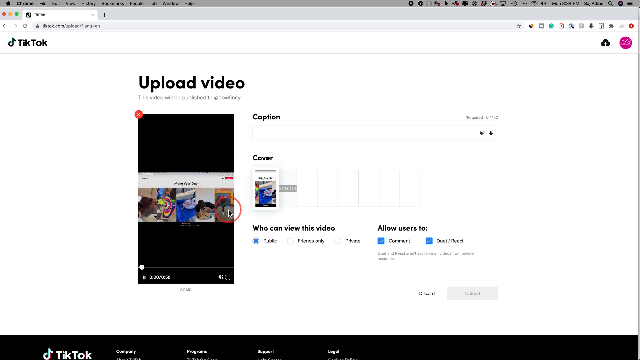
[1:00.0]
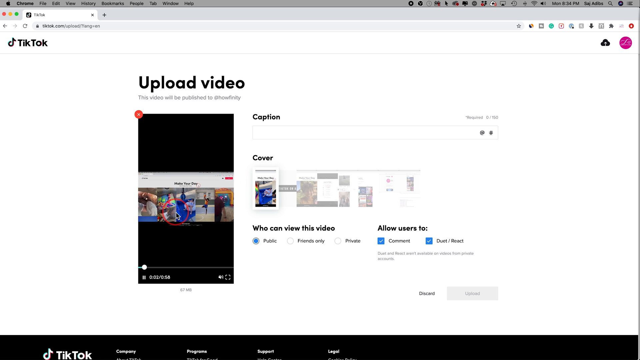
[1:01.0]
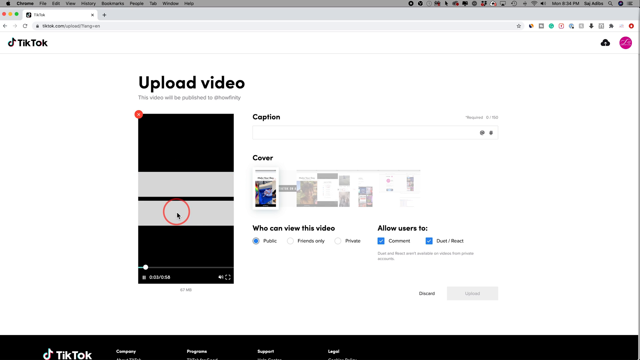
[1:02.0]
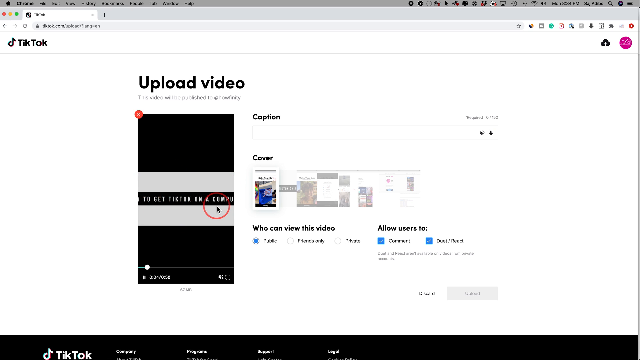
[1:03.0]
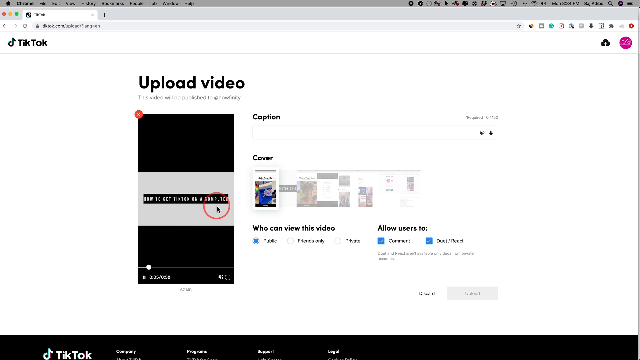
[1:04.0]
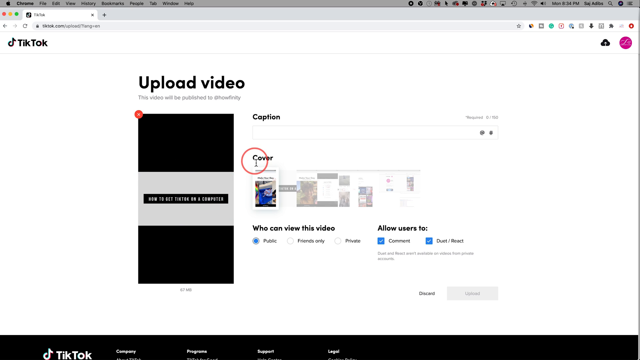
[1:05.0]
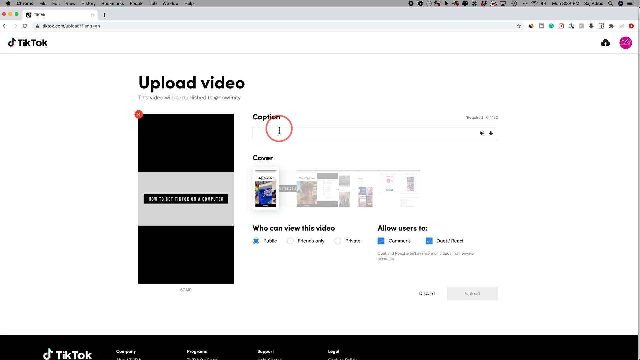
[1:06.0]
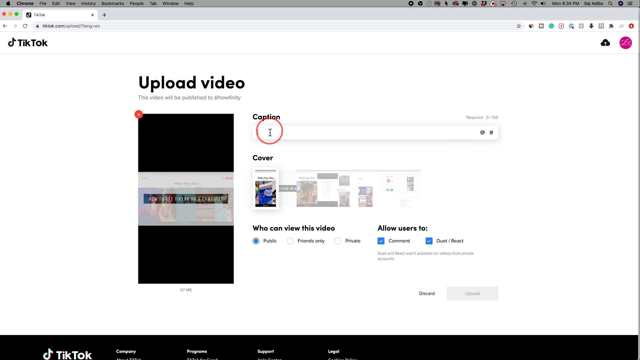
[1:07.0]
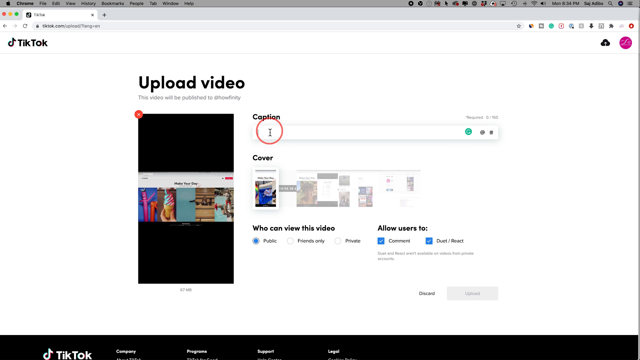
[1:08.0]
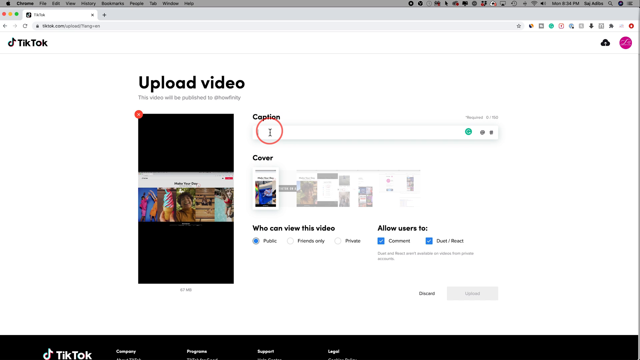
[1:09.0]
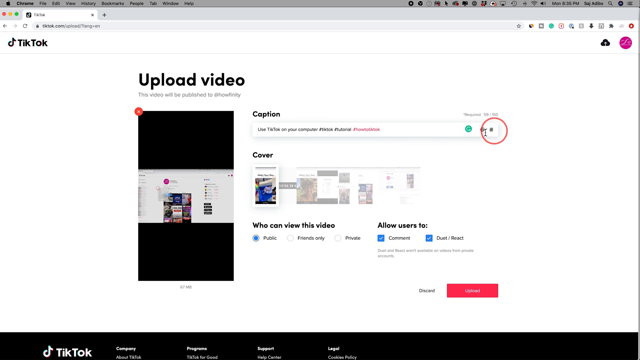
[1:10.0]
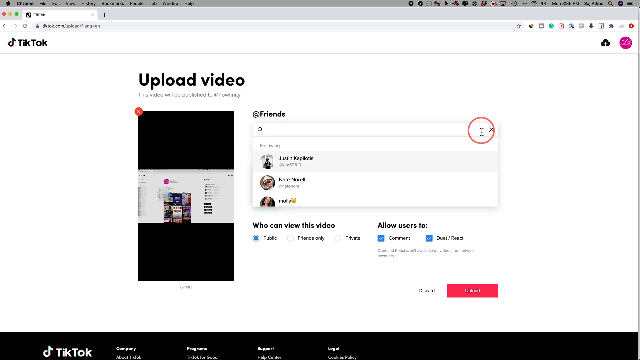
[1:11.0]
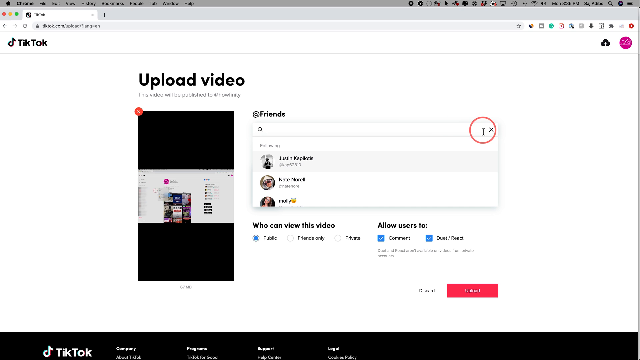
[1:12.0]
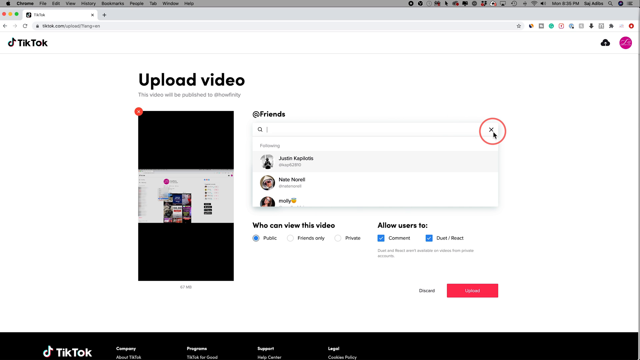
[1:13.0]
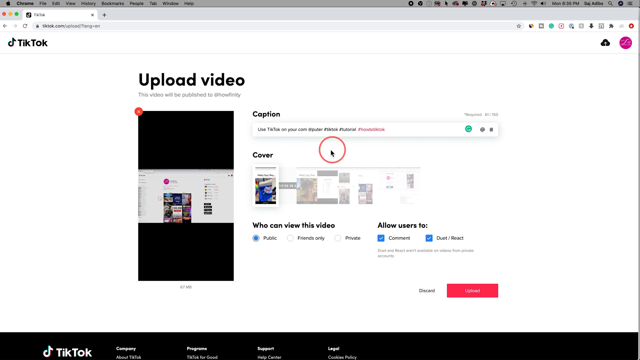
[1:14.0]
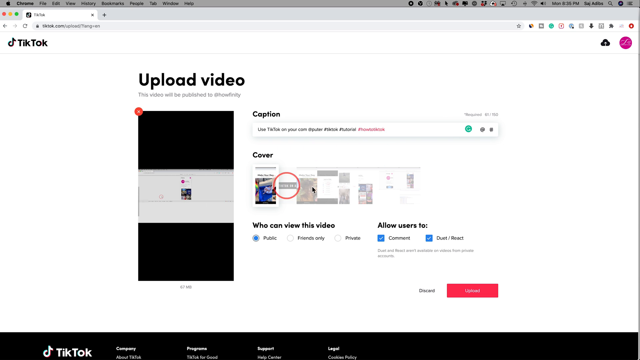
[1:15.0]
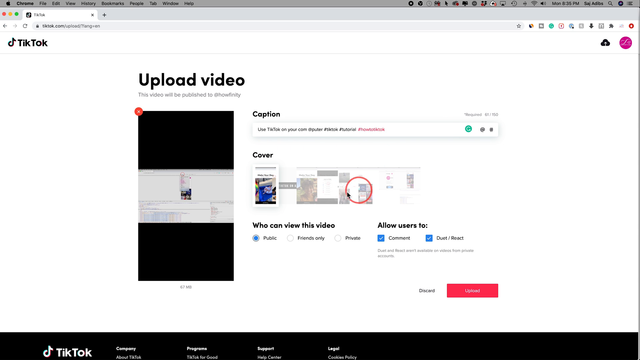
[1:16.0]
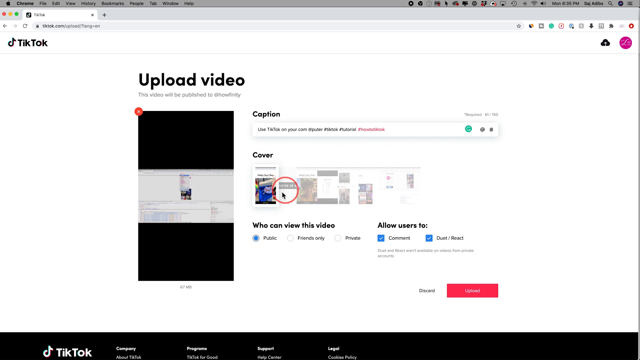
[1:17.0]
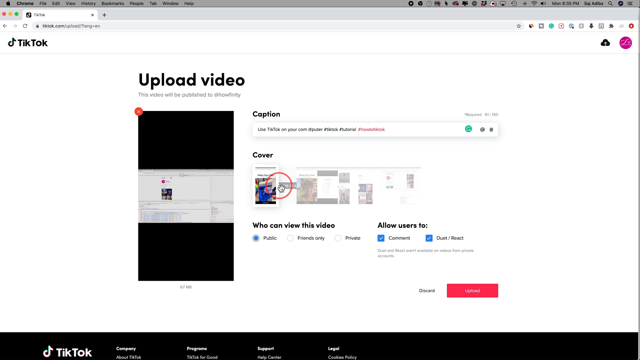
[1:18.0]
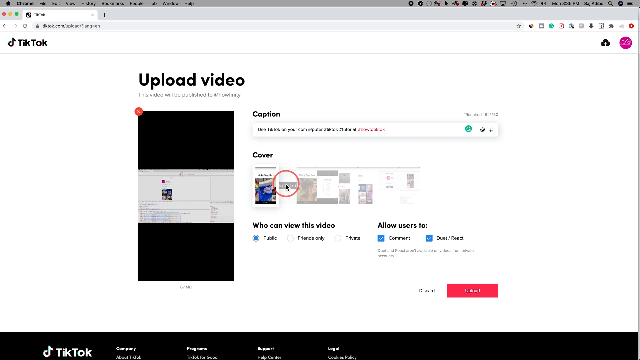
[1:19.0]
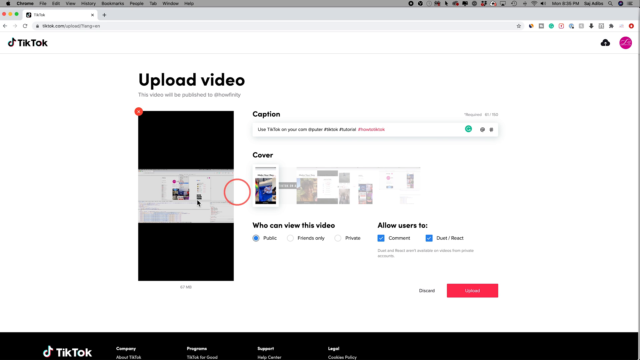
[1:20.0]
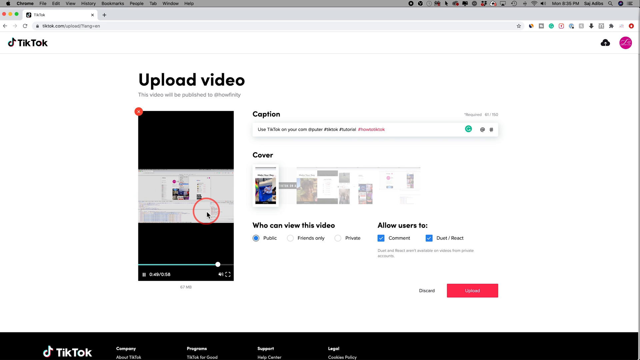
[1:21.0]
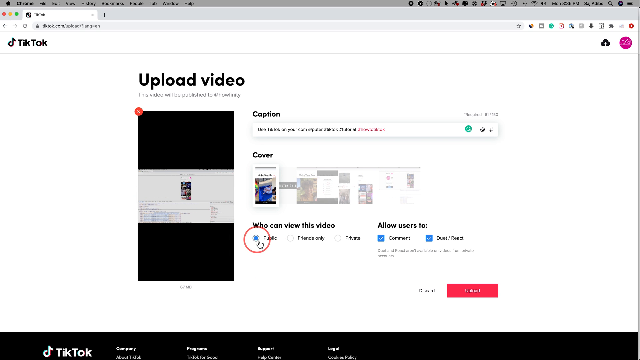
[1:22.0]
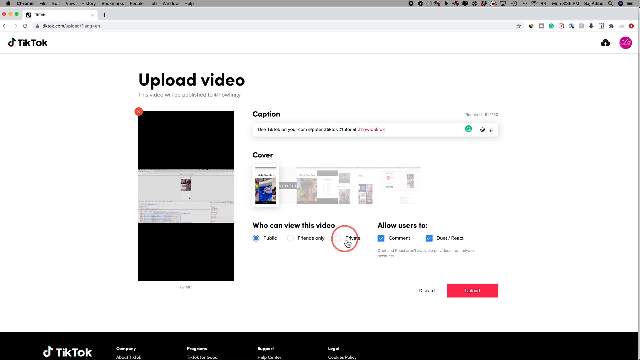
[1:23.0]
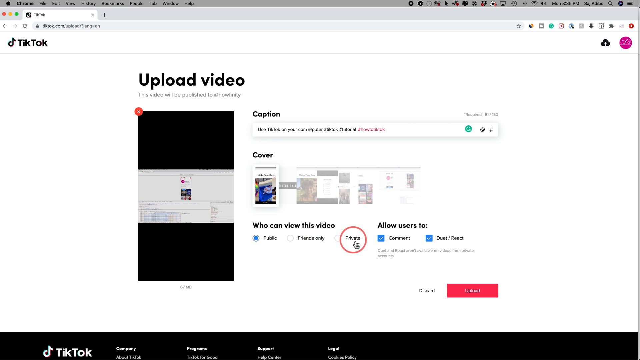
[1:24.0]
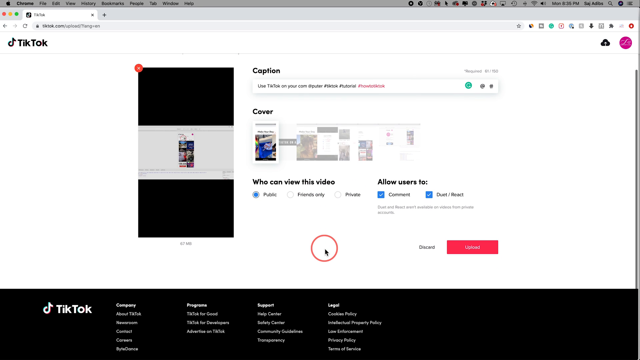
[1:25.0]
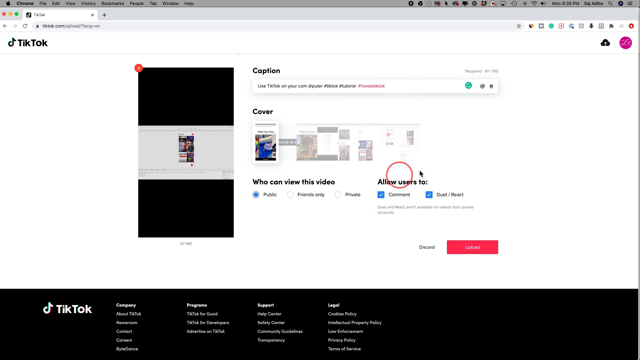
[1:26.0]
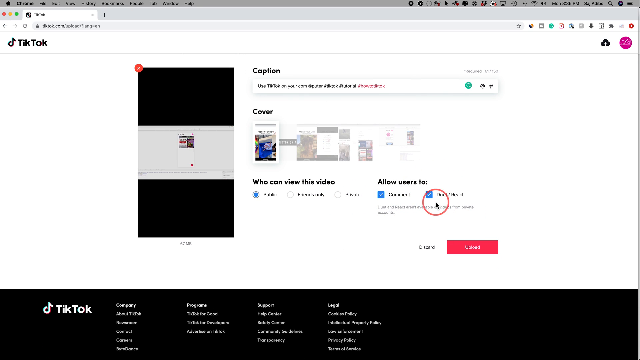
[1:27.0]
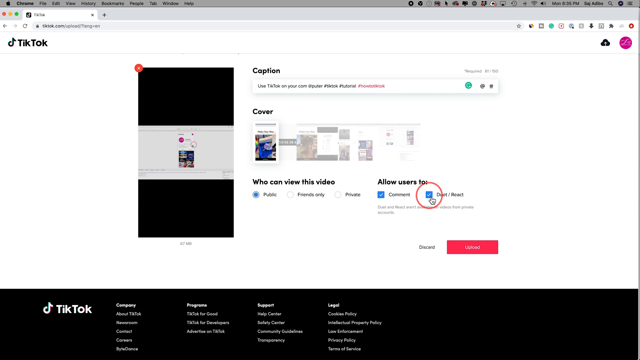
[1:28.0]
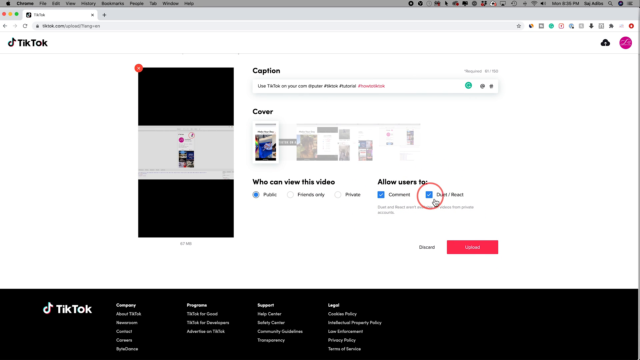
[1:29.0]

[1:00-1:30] The cursor, still surrounded by a red circle, hovers over the uploaded video of the TikTok front page in the upload section, then over the word "cover" in the cover section, then over the word "caption." It clicks the field under caption, and a green circle with a sort of arrow in it appears on the right side of the caption field. Text is pasted in: "use TikTok on your computer #TikTok #tutorial," followed by "#howtoTikTok" in pink text. The cursor moves to the button next to the green circle and clicks it, opening a menu of followers, including a man named Justin Kaplotis, a man named Nate Norrell and a woman named Molly. After briefly opening the menu, the X is clicked, collapsing it. The cursor then moves to the cover section and runs along the various frames of the video there, returns to the video portion and hovers over the video, moving in a little circle. It moves to the who can view this video section, hovering over the options friends only, private and public, then to the allow users to section, hovering over the options to duet/react. Finally, it goes to the pink upload button and clicks it.